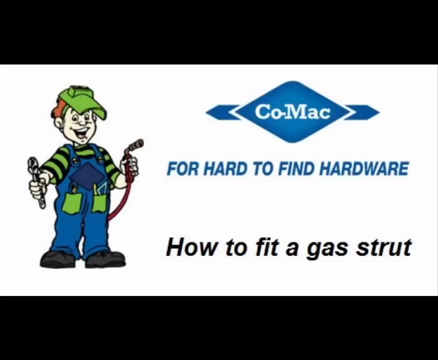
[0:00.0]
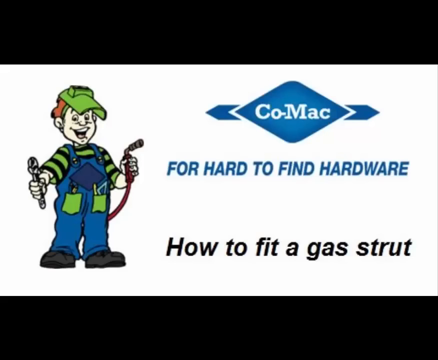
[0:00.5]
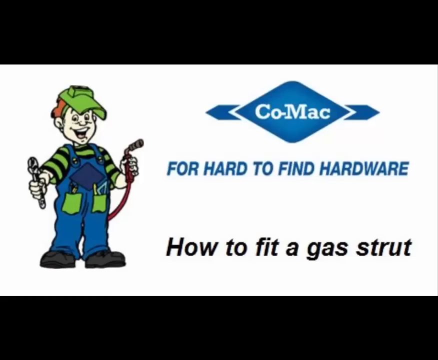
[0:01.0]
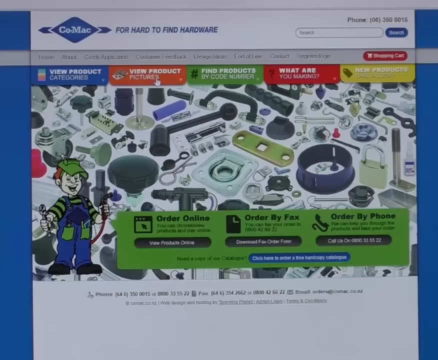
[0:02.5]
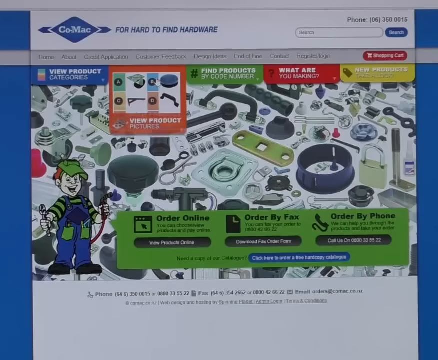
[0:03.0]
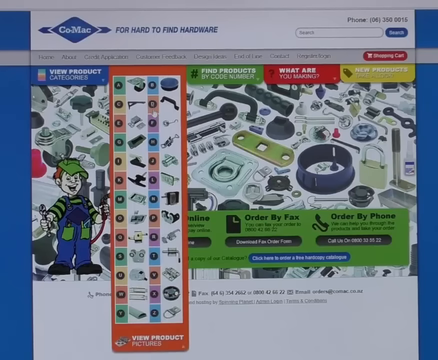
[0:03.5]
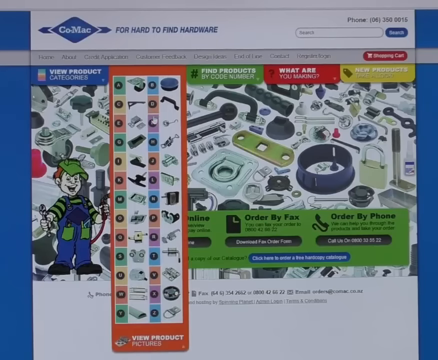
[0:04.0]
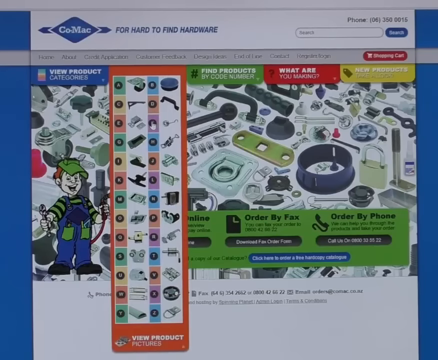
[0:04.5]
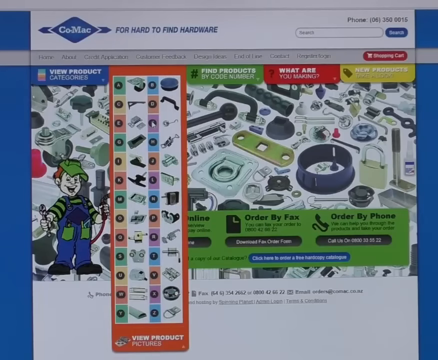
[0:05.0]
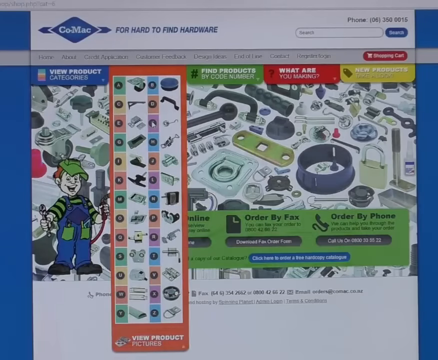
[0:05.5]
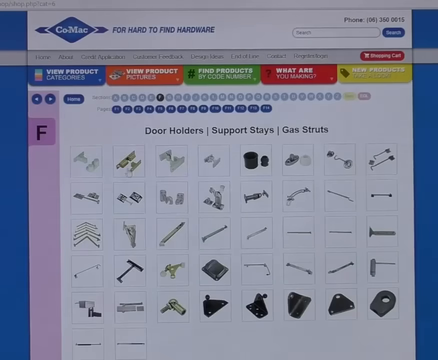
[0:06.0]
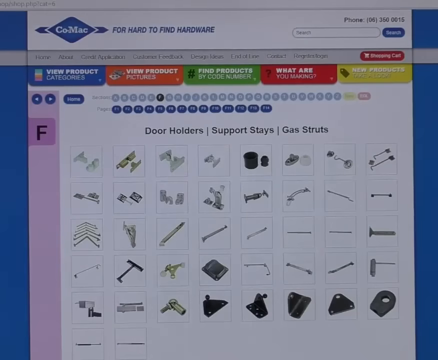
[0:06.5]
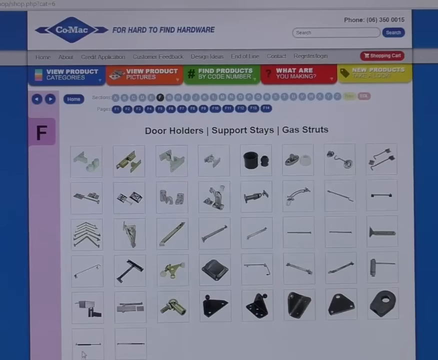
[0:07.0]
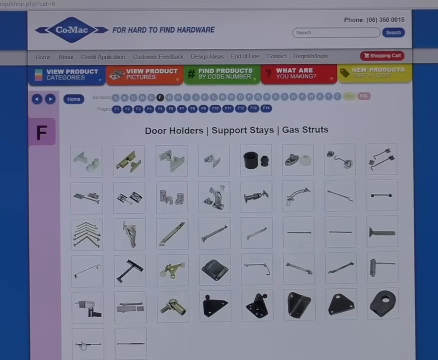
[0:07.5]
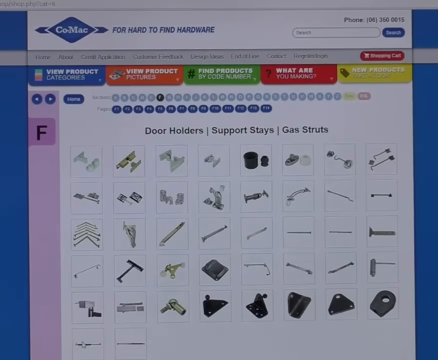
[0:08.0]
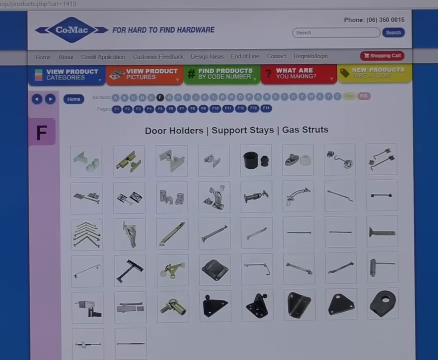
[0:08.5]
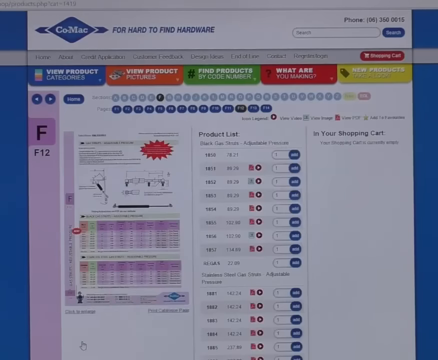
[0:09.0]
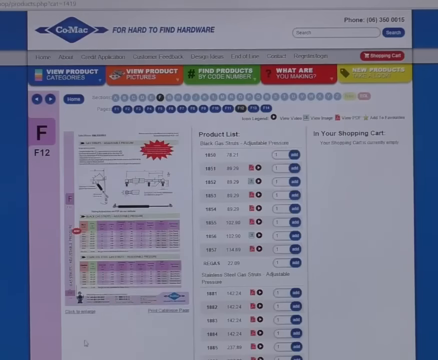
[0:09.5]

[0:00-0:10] A cartoon avatar character holds a red hose in his left hand and what looks like a wrench in his right hand. He wears blue overalls with green pockets and, at the center top of the overalls, a diamond shape in a darker blue than the overalls. His shirt is green and black striped, he wears a green hat, and he has red hair. His skin color matches the background of the screen. The text "Co-Mac" is in the center of a sideways diamond-shaped logo, along with the text "for hard to find hardware" and "how to fit a gas strut." A fast-paced tutorial follows, showing a lot of things at the same time. The mouse is sort of visible, and the little cartoon character laughs while the first part of the video plays and the website is being searched.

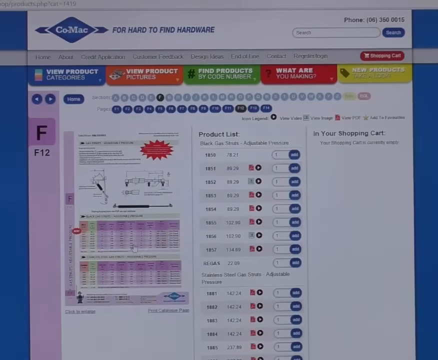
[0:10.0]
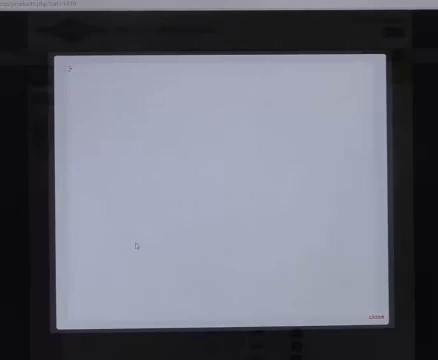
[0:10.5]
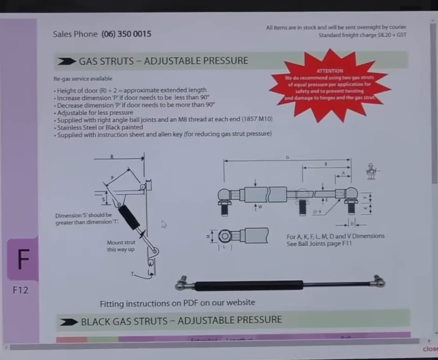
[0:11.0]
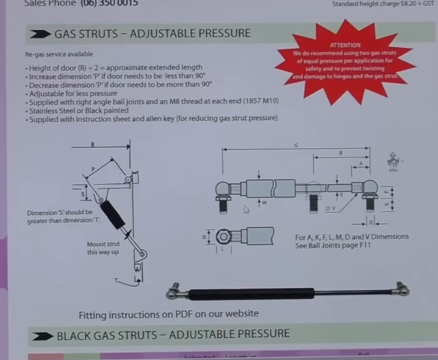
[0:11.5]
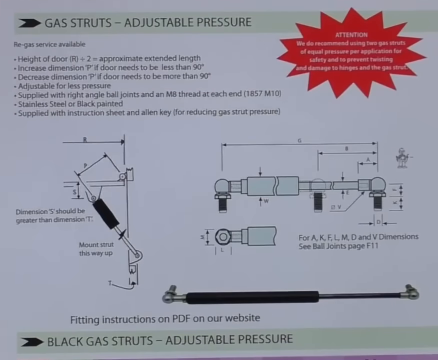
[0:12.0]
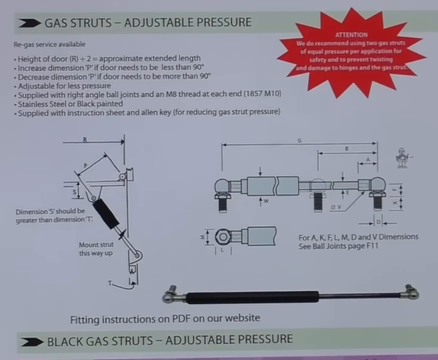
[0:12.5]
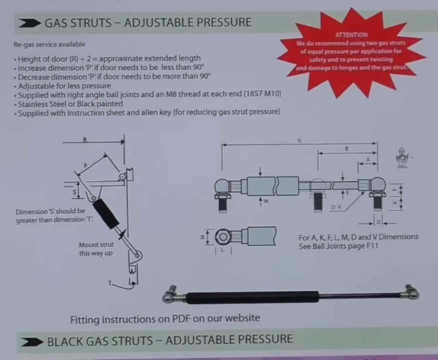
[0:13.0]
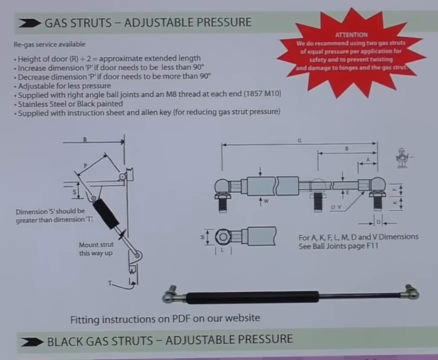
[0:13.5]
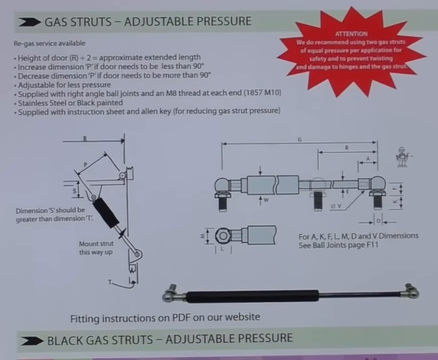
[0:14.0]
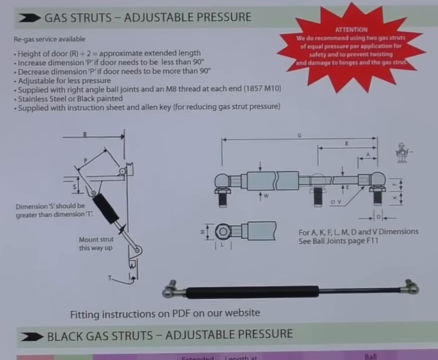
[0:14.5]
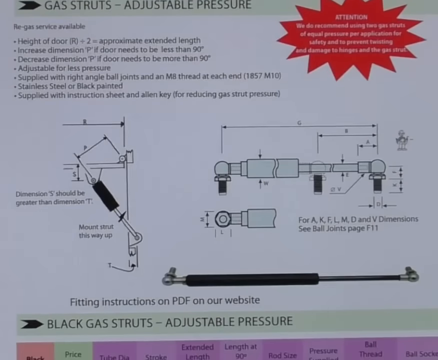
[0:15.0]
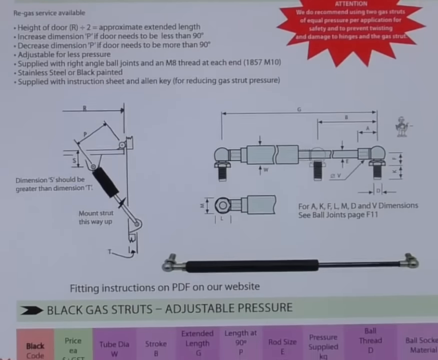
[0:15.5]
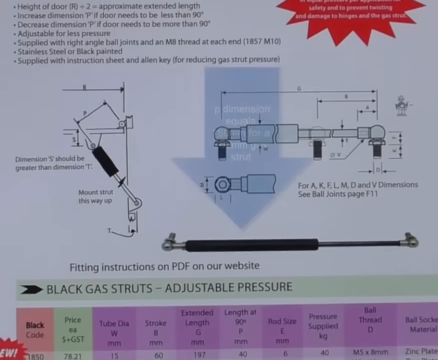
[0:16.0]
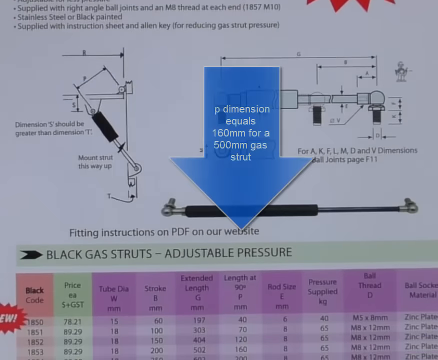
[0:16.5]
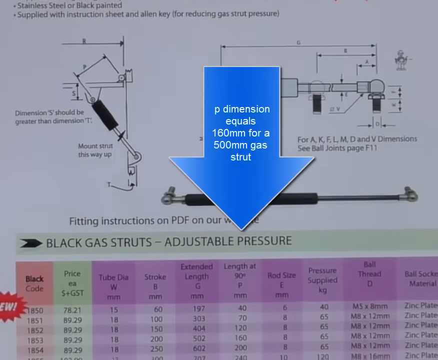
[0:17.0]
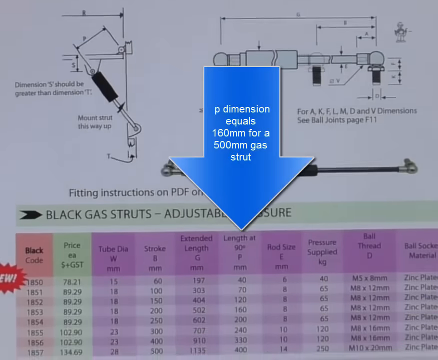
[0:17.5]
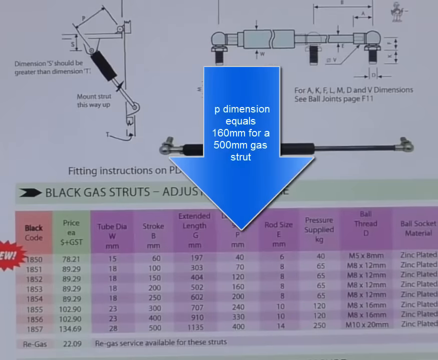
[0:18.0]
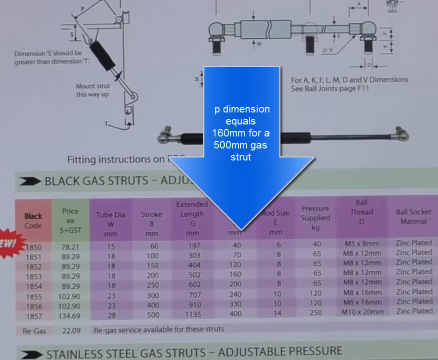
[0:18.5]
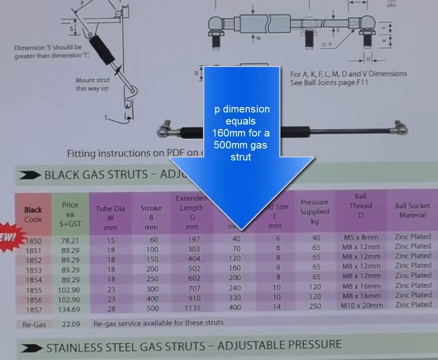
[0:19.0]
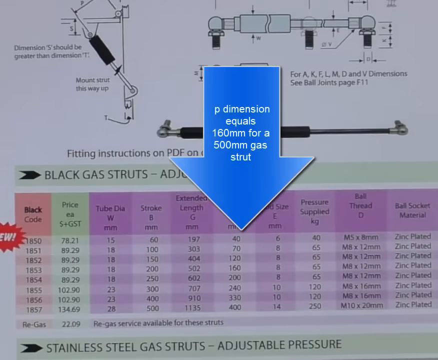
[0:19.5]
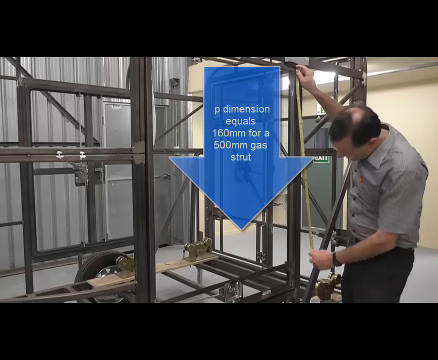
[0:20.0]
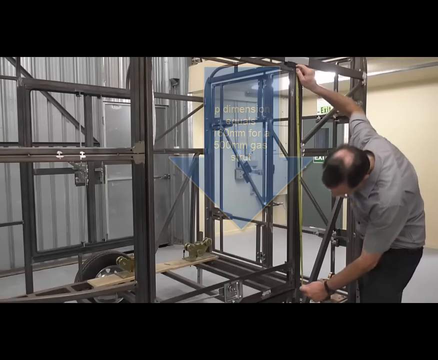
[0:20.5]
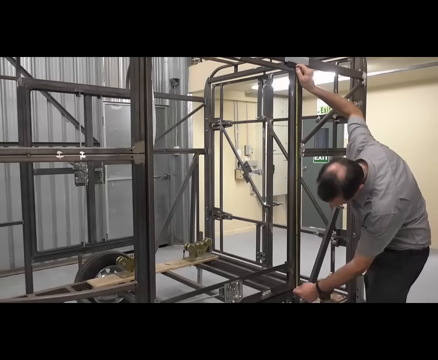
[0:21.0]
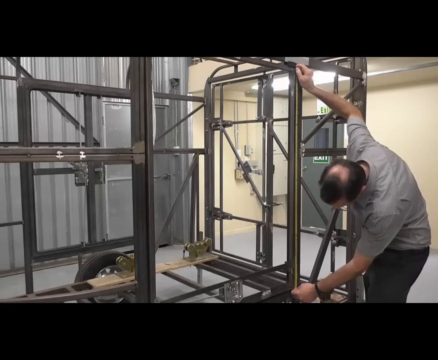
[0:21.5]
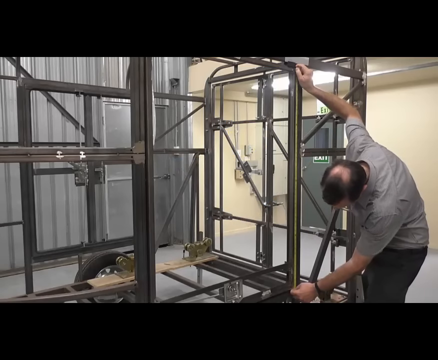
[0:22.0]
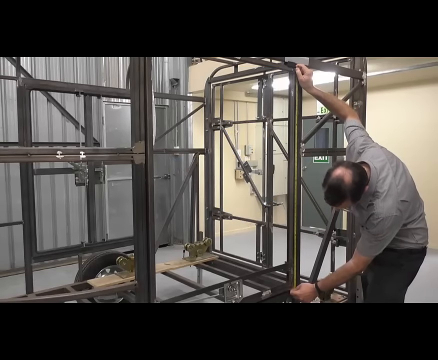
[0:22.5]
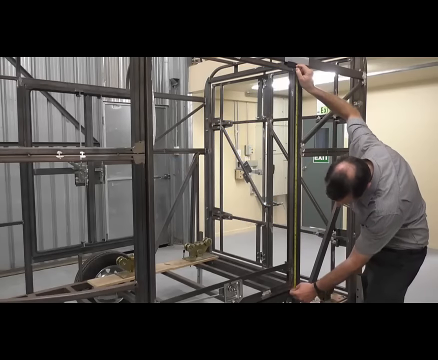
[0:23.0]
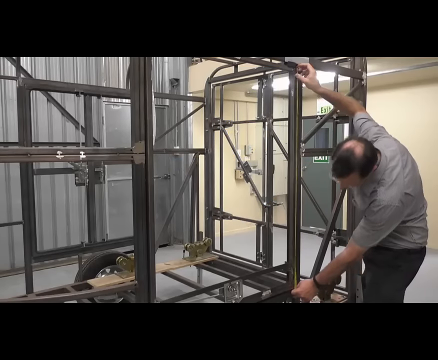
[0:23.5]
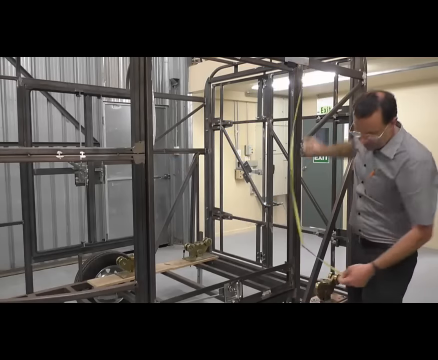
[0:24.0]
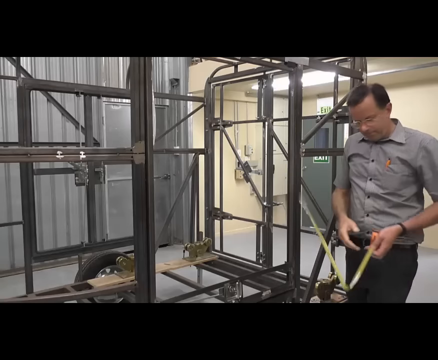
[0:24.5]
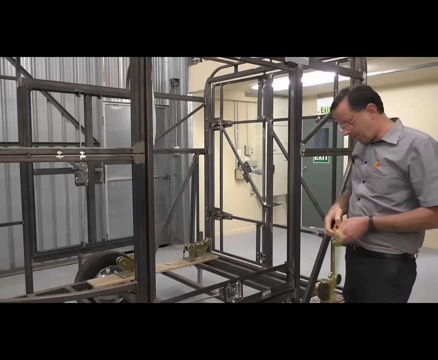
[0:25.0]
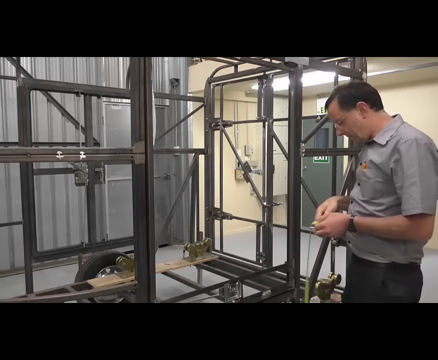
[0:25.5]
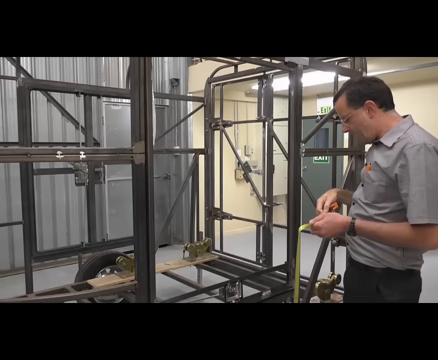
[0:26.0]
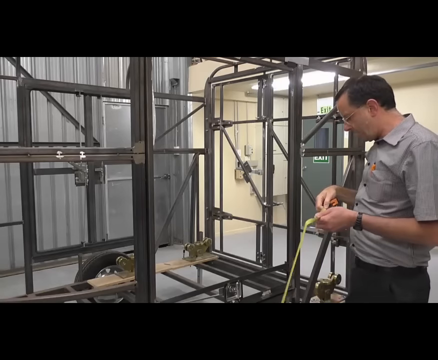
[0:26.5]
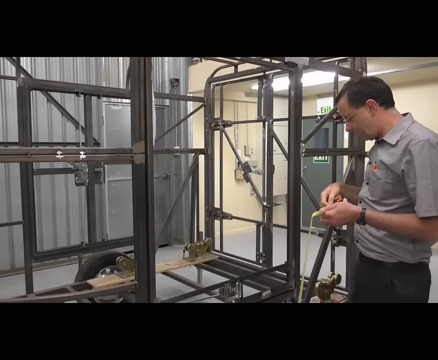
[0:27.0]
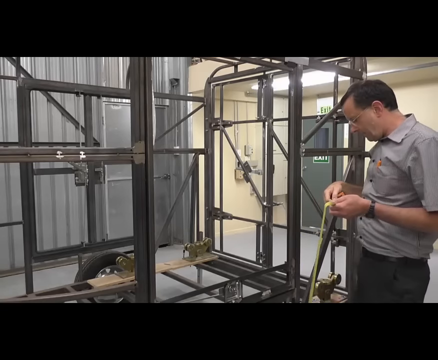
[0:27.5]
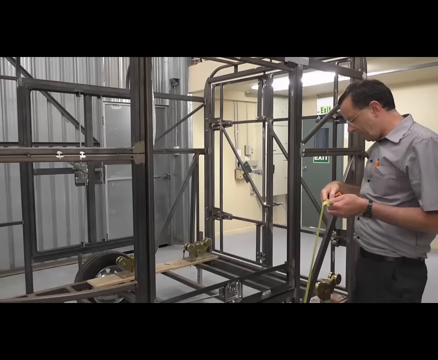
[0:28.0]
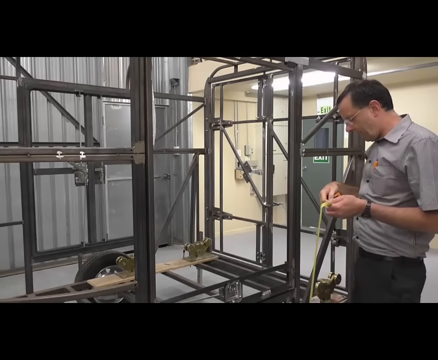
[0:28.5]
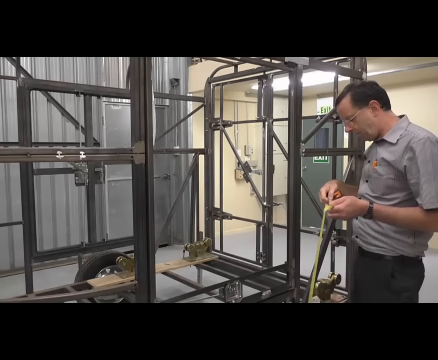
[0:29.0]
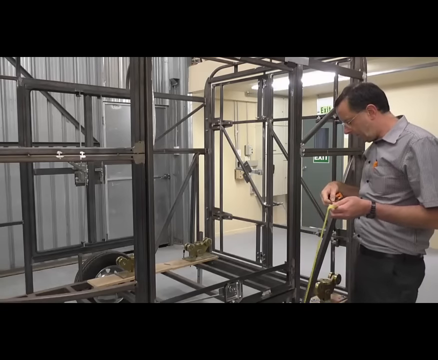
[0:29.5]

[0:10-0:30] A chart about gas struts appears, with a large "P dimension" value of 160-something that passes too quickly to read fully. A man measures some type of metal frame with wheels under it. The screen being recorded is the COMAC website, which shows that the gas struts have adjustable pressure, and there are black gas struts. The website is colorful, with blue, orange, green, red and yellow tabs reading "view product categories," "view product pictures," "view products by code," and "what are you," with the rest of that last one cut off.